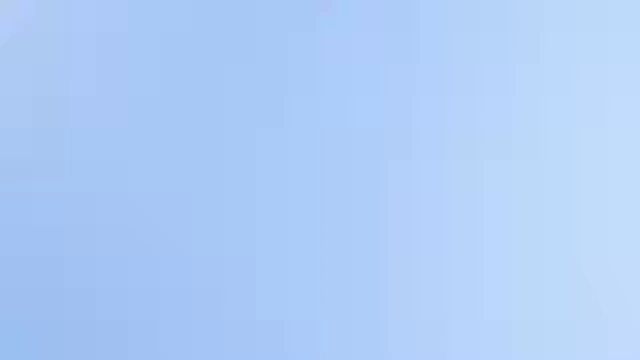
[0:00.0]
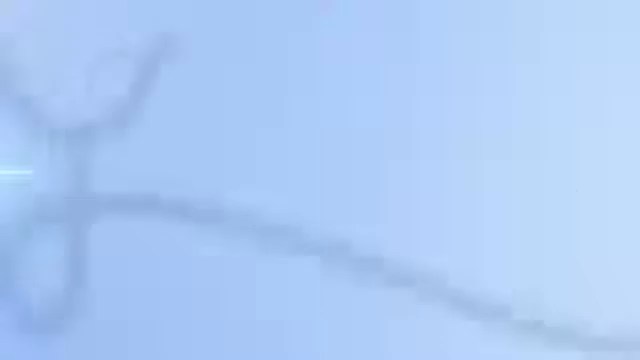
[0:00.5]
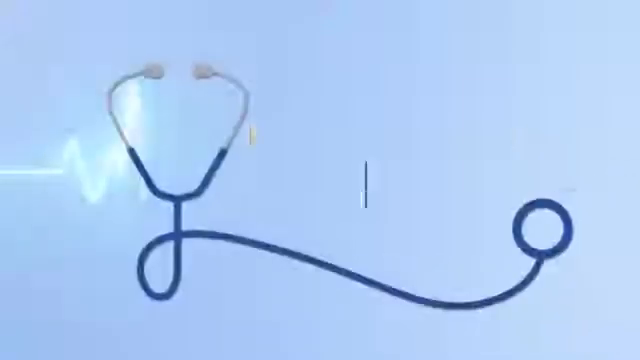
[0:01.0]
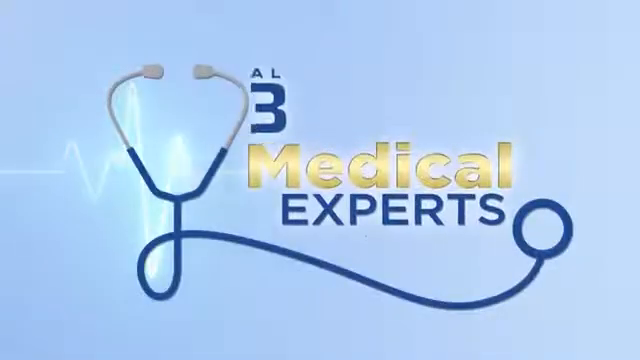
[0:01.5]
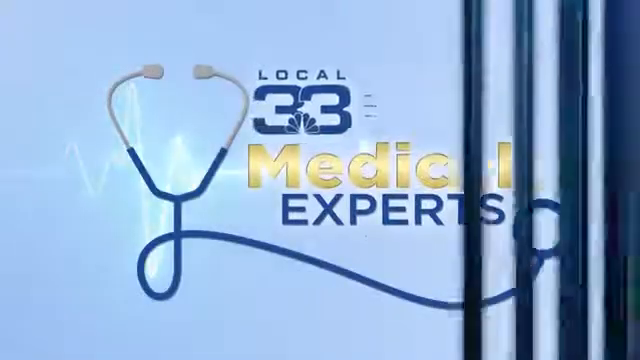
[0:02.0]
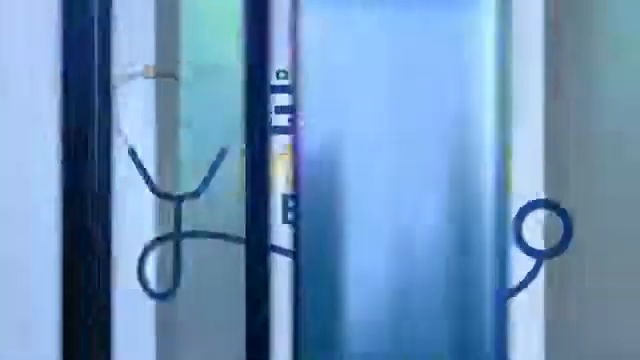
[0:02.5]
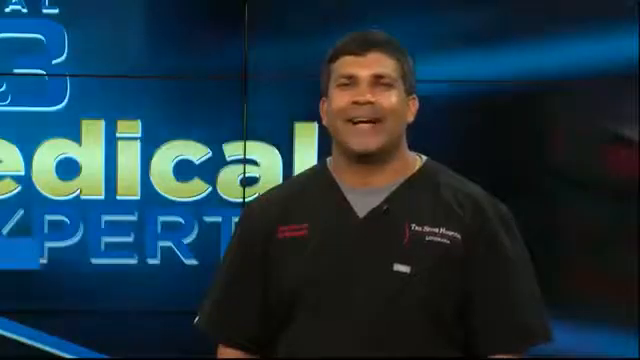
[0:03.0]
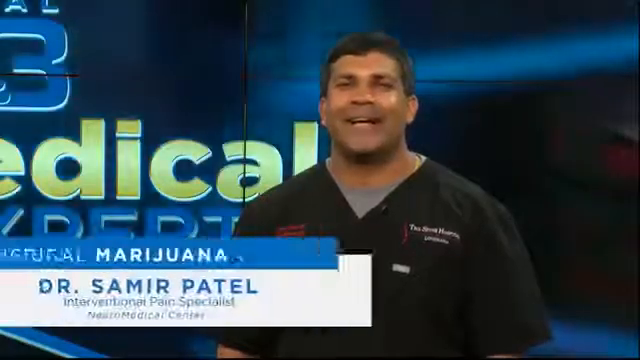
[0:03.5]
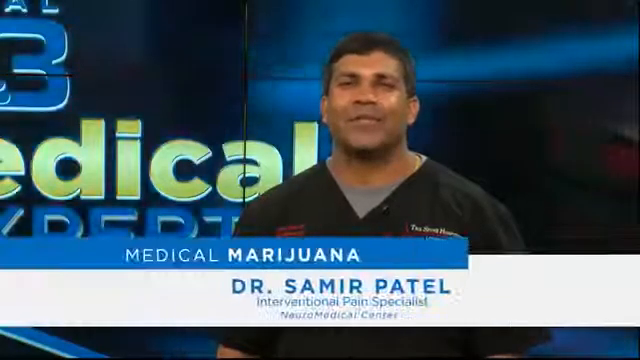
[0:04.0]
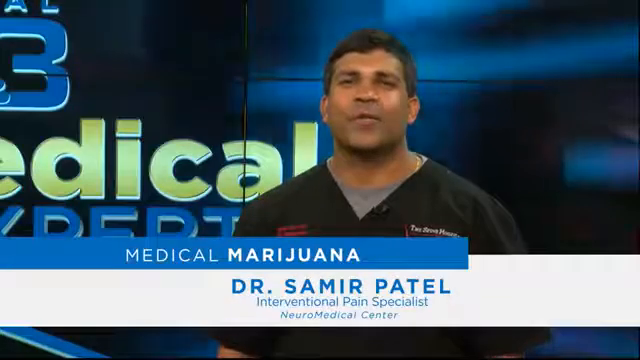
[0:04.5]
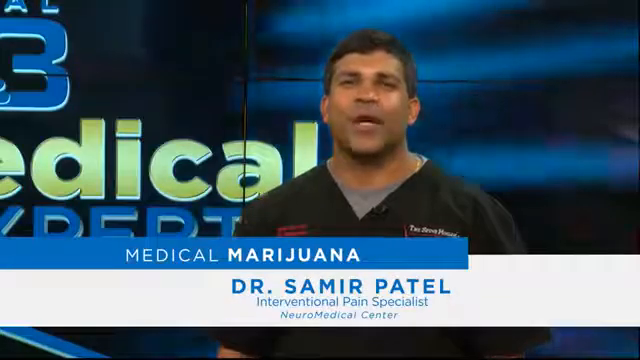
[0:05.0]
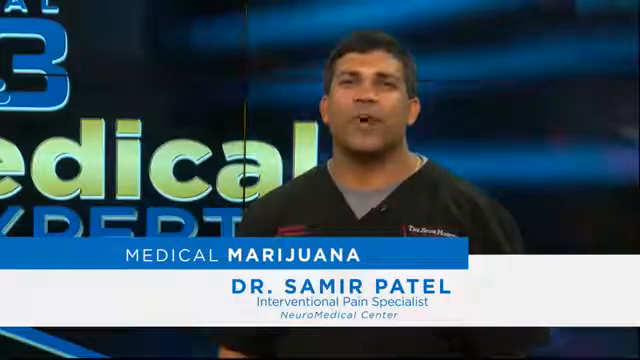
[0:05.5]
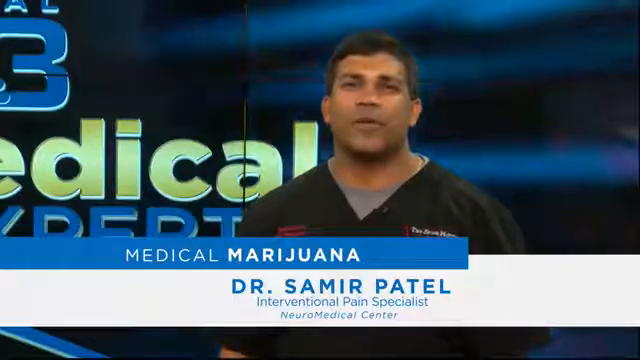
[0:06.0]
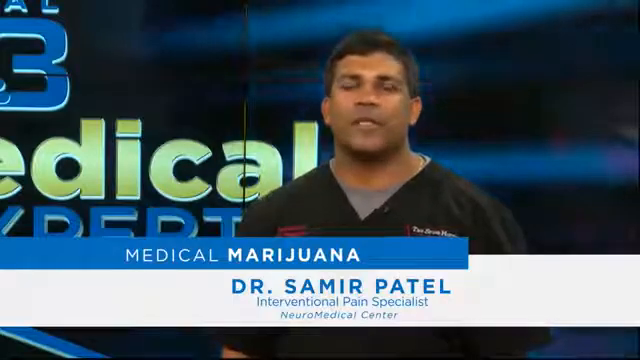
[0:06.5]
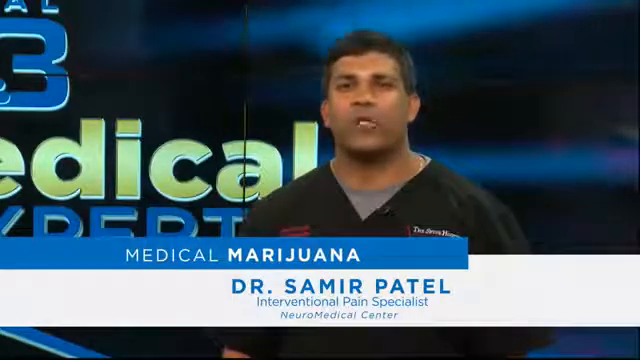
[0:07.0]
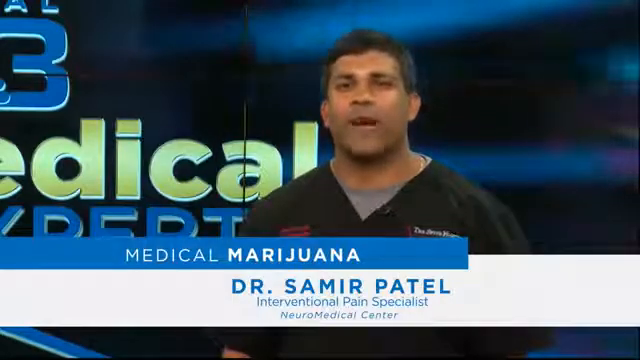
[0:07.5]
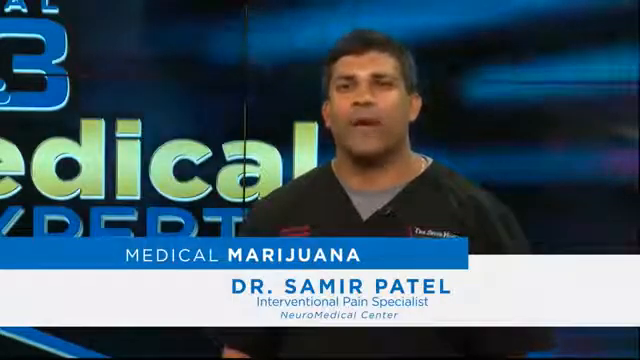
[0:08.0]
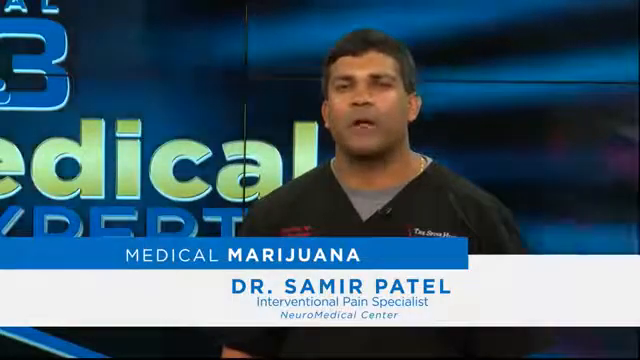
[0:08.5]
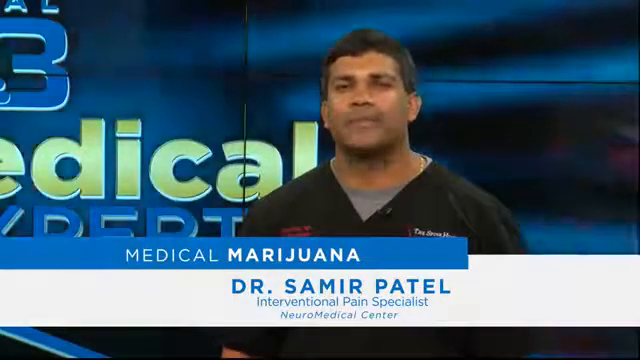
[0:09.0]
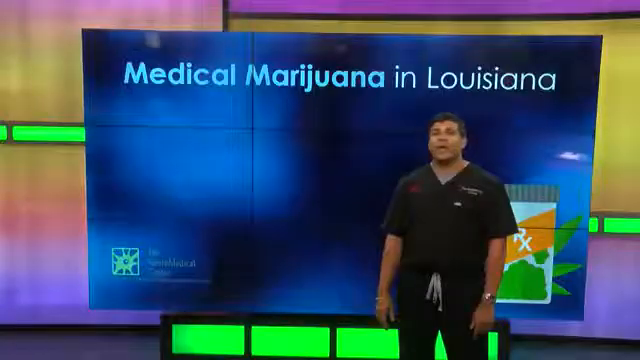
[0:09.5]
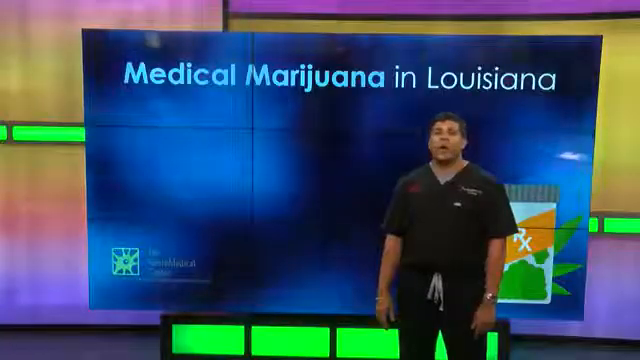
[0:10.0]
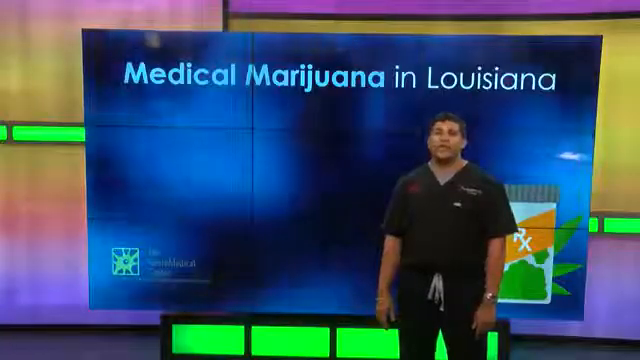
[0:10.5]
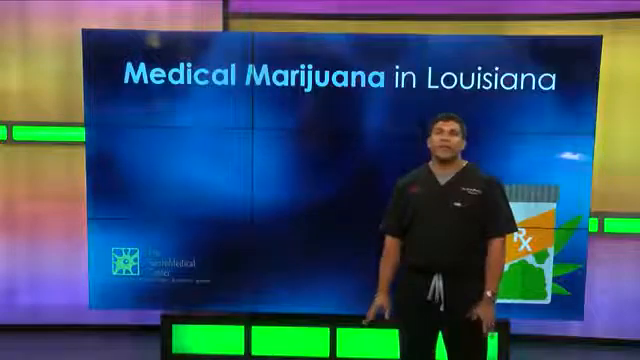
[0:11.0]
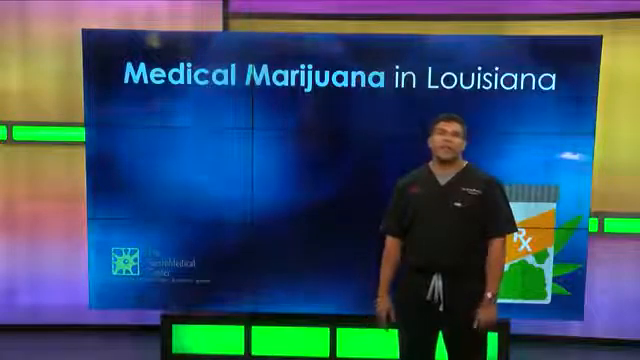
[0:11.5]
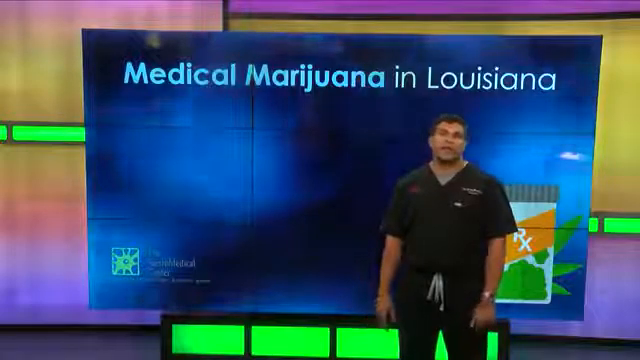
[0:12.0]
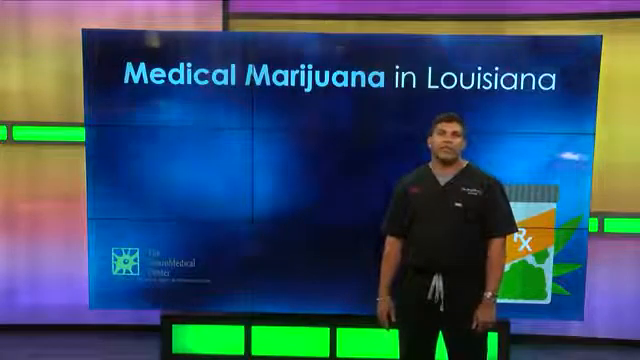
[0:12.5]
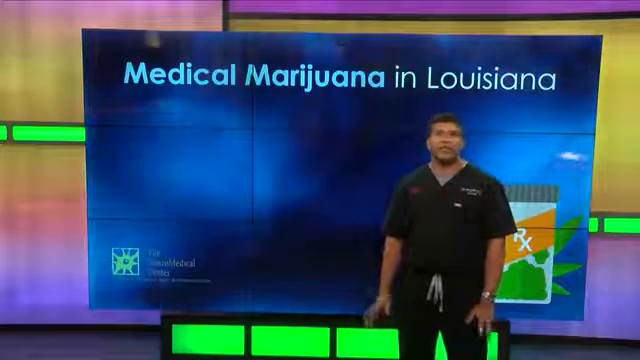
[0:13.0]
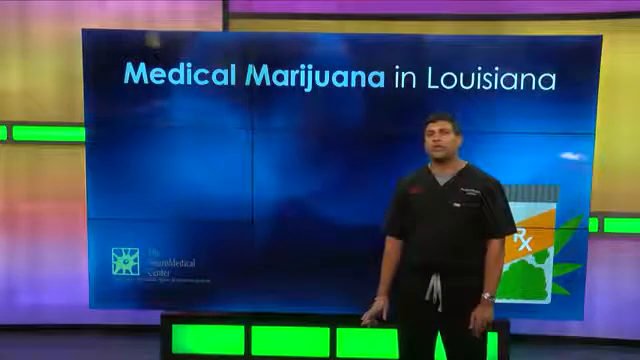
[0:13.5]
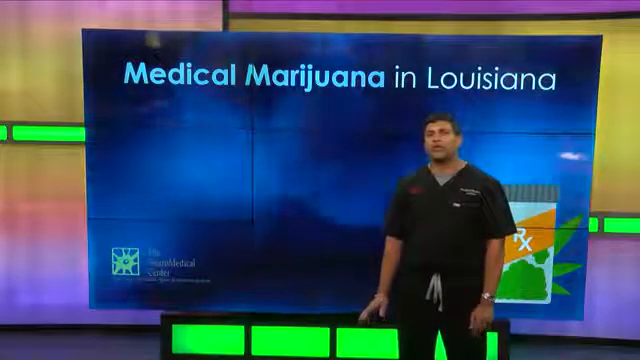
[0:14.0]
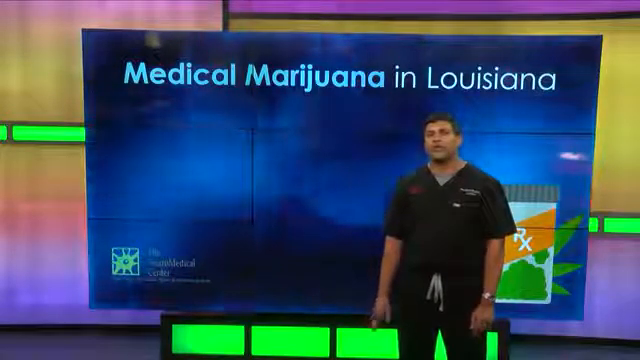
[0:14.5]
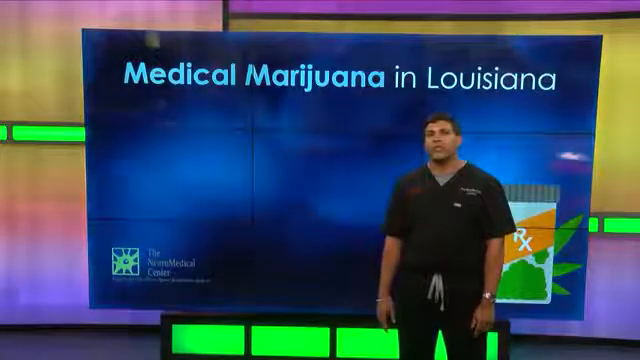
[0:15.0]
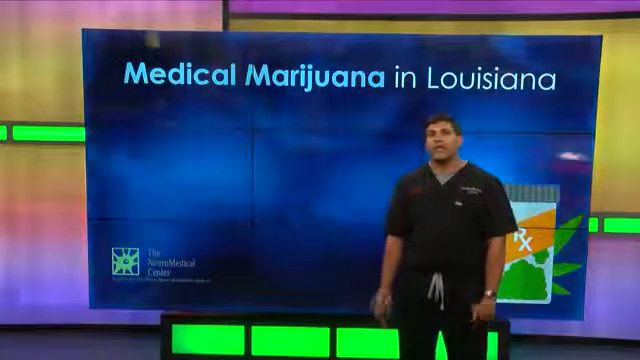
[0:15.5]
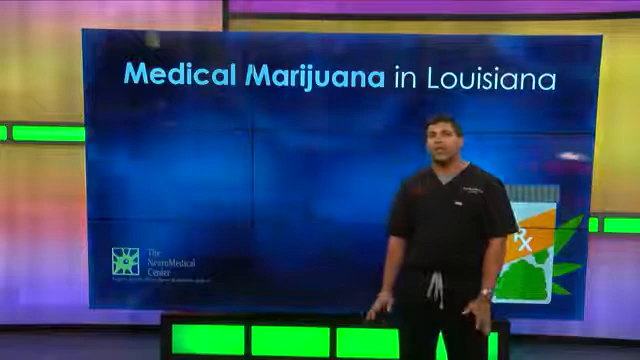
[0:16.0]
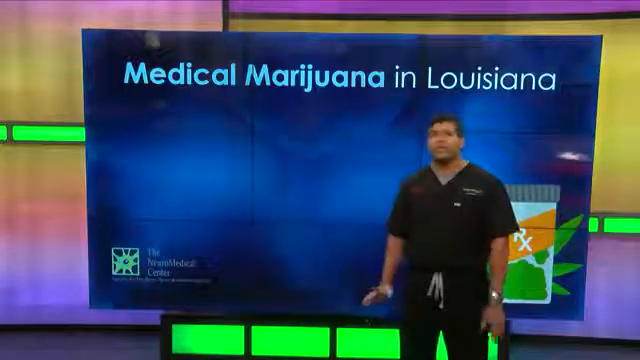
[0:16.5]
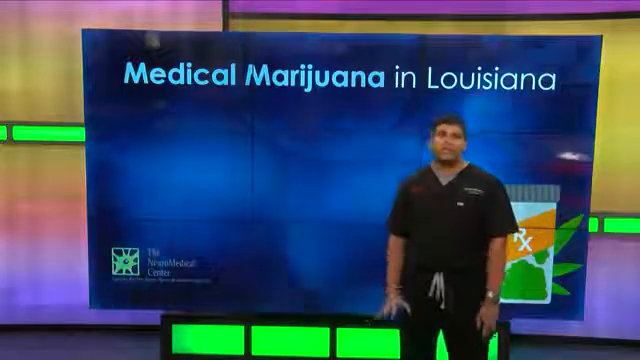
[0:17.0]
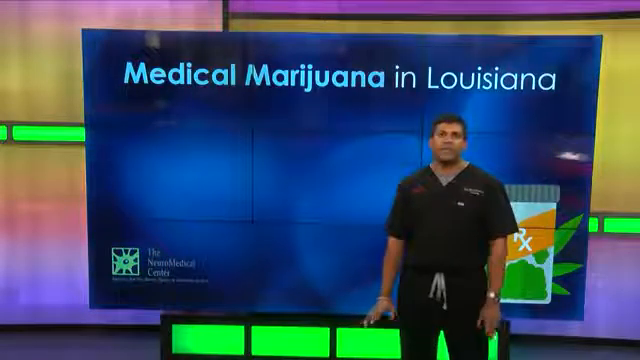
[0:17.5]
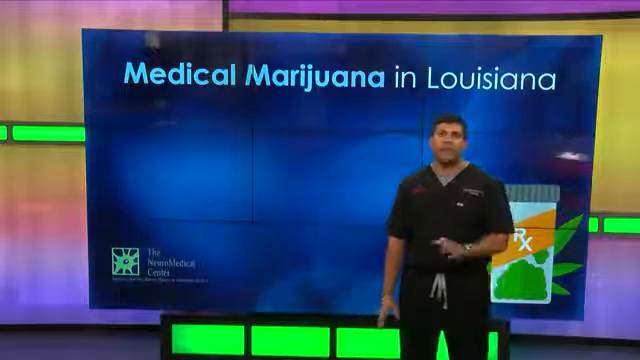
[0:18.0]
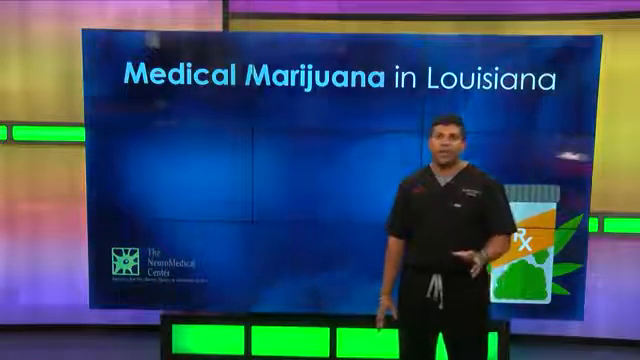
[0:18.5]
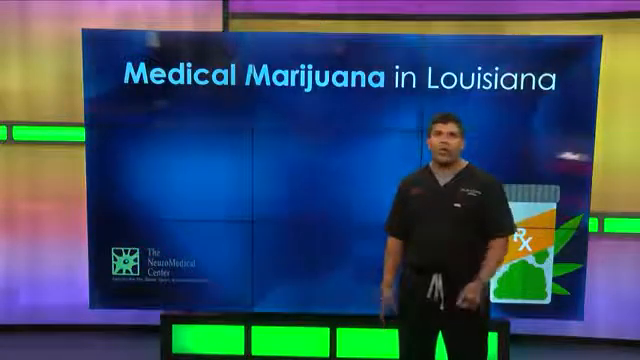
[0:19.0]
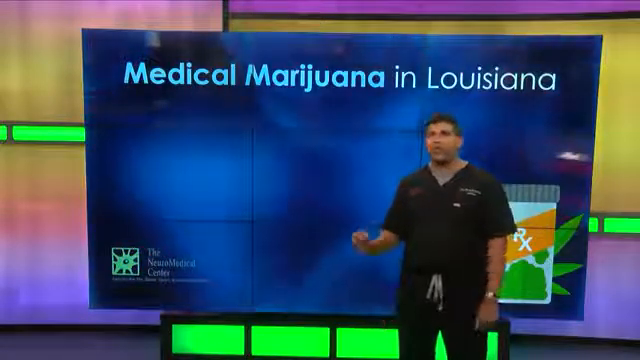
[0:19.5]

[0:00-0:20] The video opens with an image of a stethoscope and an EKG line, then the number three and "medical experts." It transitions to a newsroom, where a male physician wears black scrubs with a gray t-shirt underneath. A banner enters at the bottom of the screen and reads "medical marijuana. Dr. Samir Patel, interventional pain specialist, Neuro Medical Center." Behind him is a lighted blue screen with blue text reading "medical marijuana in Louisiana," and an RX symbol at the bottom right of the screen. Behind that is another neon-colored screen in green neon, pastel, purple and palish greens. The physician talks matter-of-factly and with confidence, using hand gestures. He has brown skin and short hair, is smiling and clean-shaven, and is possibly in his thirties. He keeps speaking in front of the sort of neon blue screen with the words "medical marijuana in Louisiana."